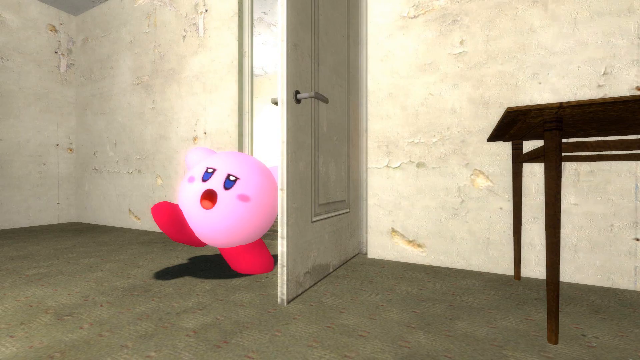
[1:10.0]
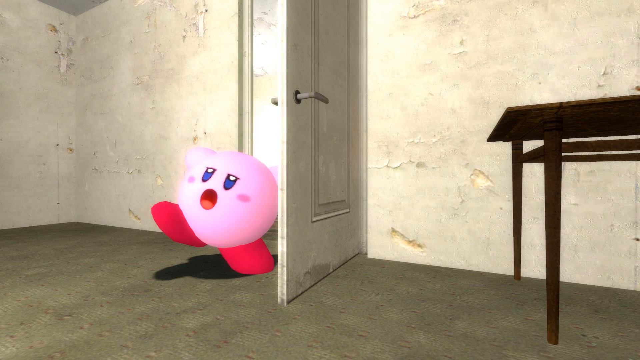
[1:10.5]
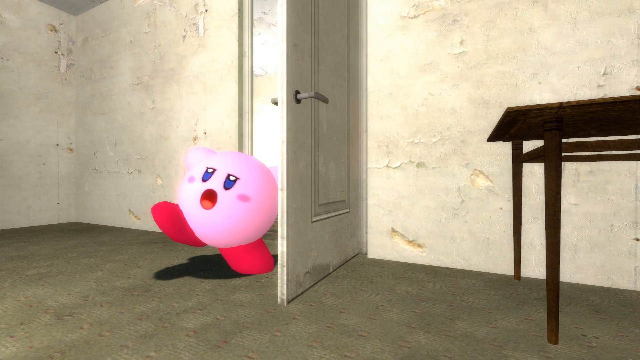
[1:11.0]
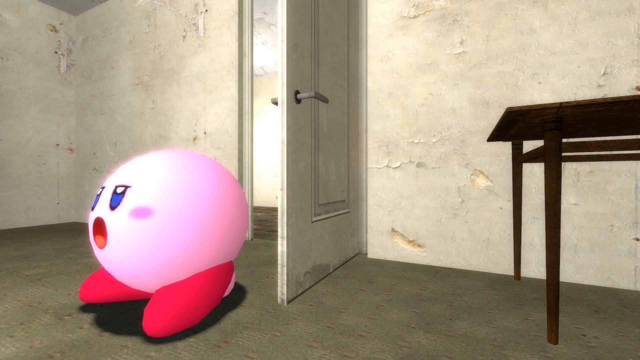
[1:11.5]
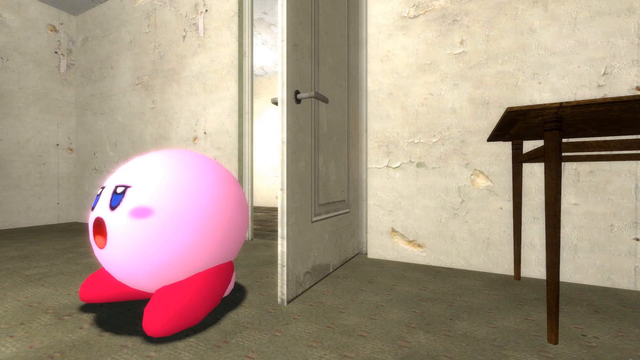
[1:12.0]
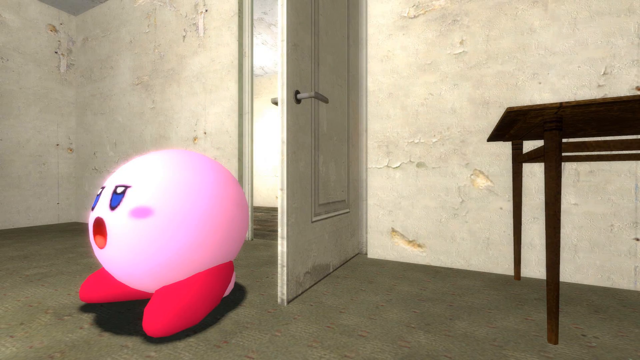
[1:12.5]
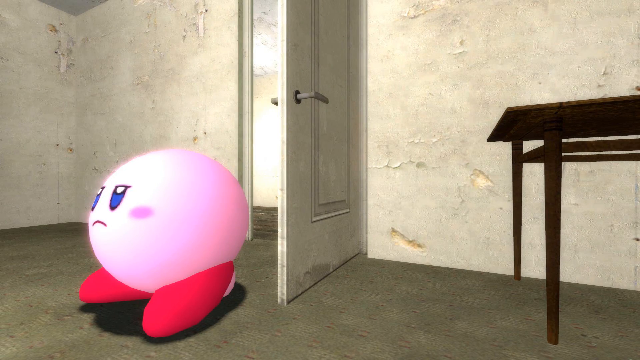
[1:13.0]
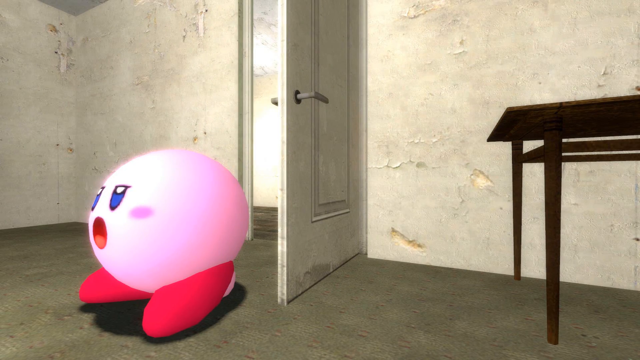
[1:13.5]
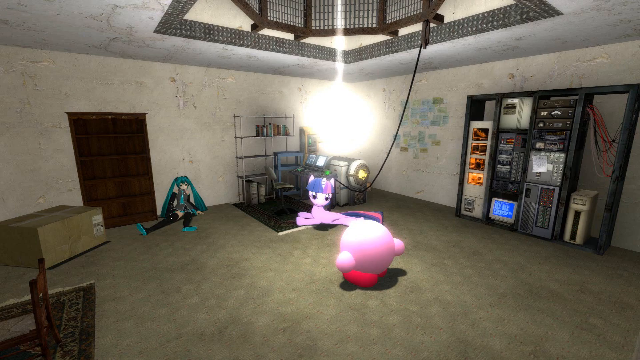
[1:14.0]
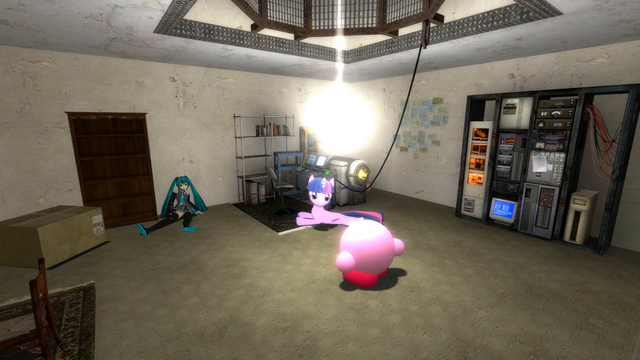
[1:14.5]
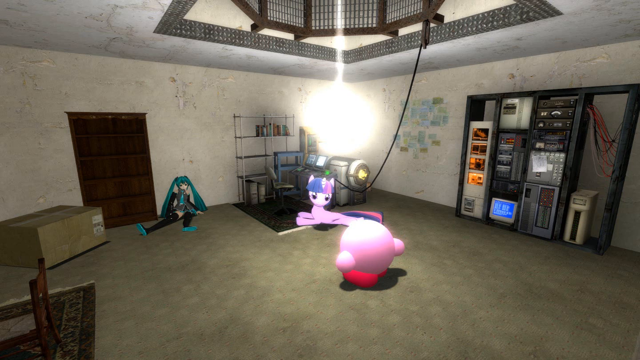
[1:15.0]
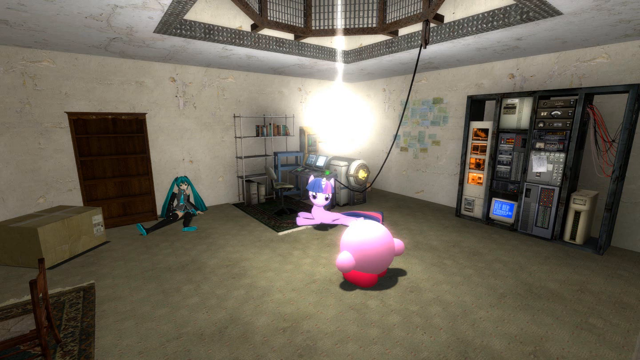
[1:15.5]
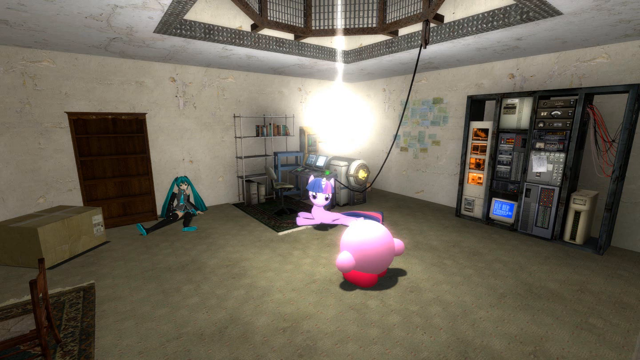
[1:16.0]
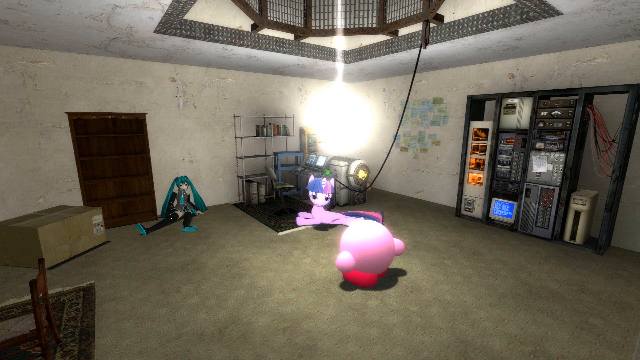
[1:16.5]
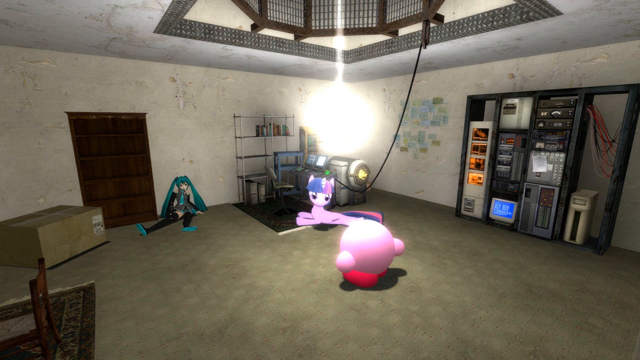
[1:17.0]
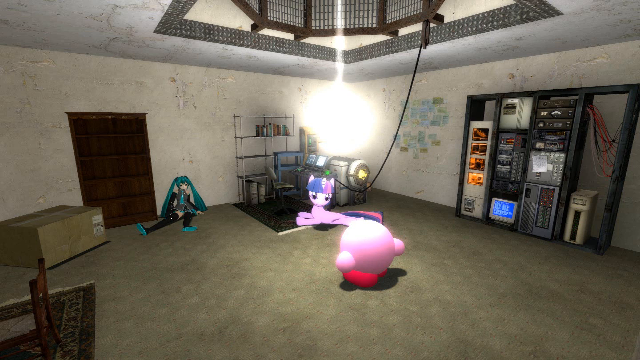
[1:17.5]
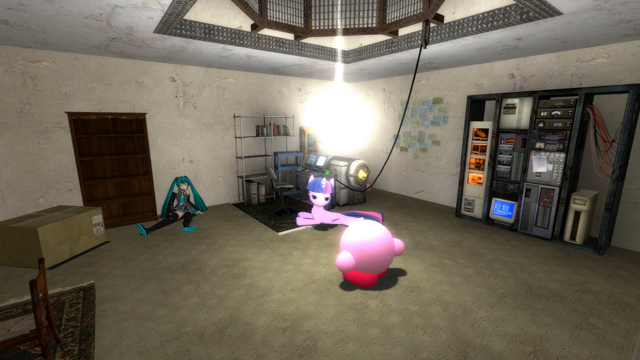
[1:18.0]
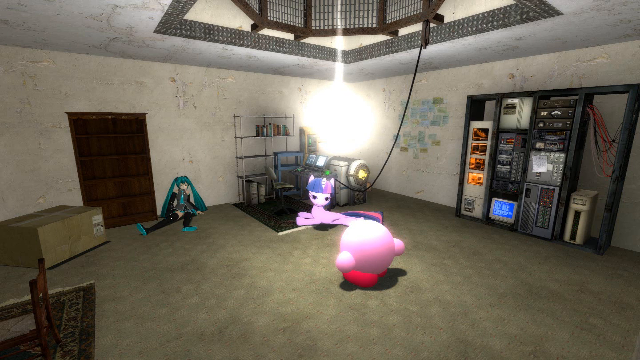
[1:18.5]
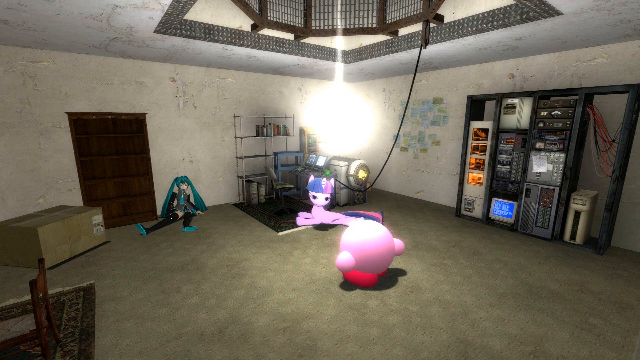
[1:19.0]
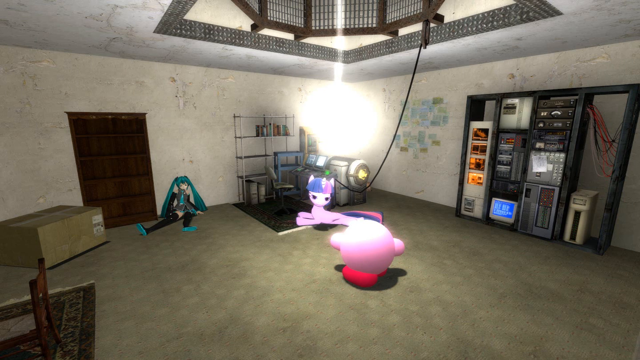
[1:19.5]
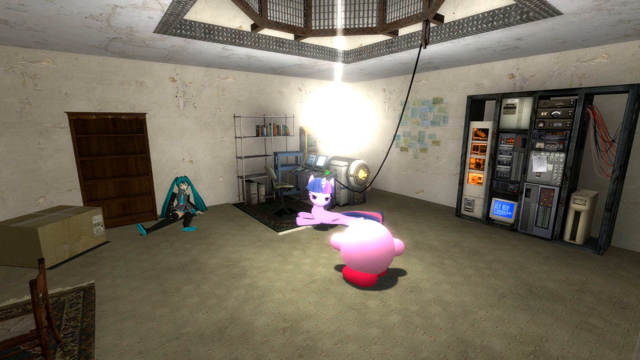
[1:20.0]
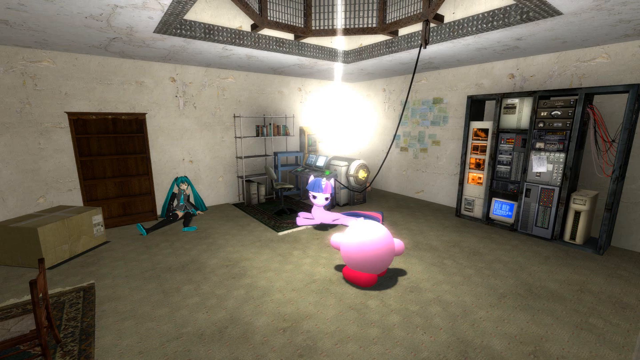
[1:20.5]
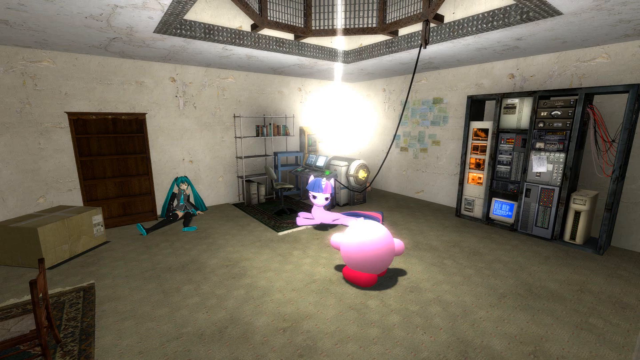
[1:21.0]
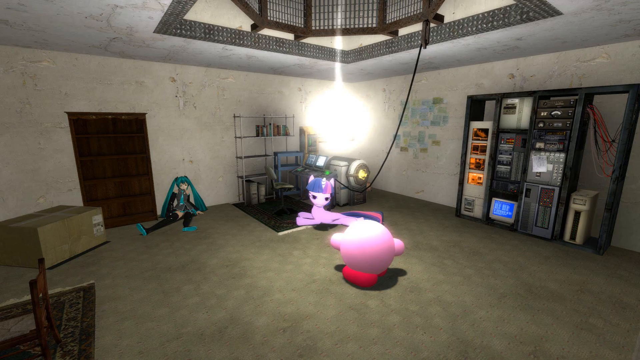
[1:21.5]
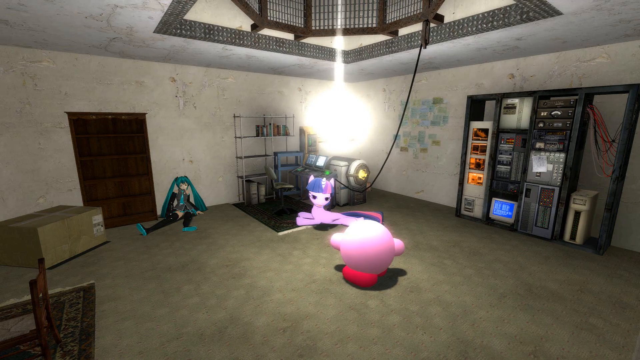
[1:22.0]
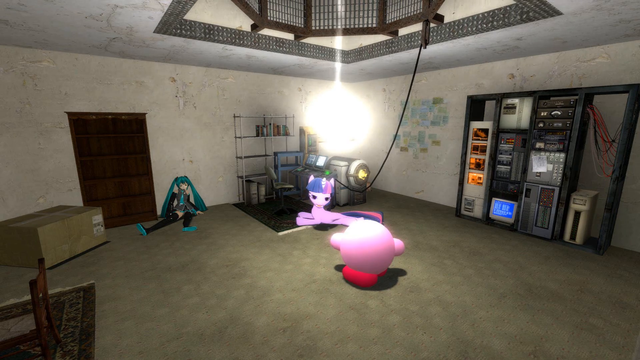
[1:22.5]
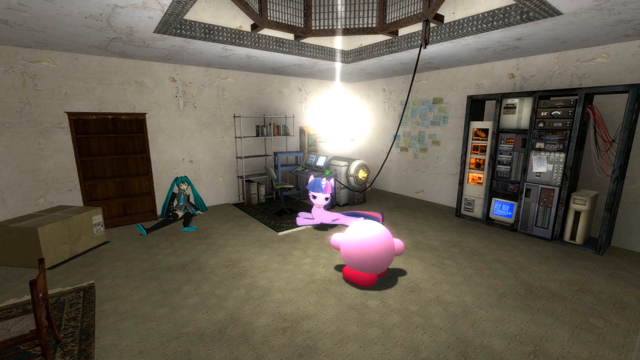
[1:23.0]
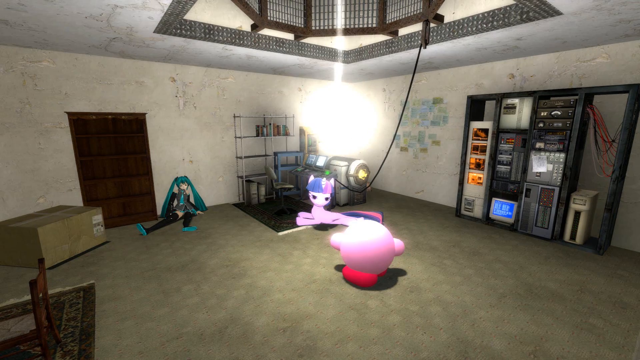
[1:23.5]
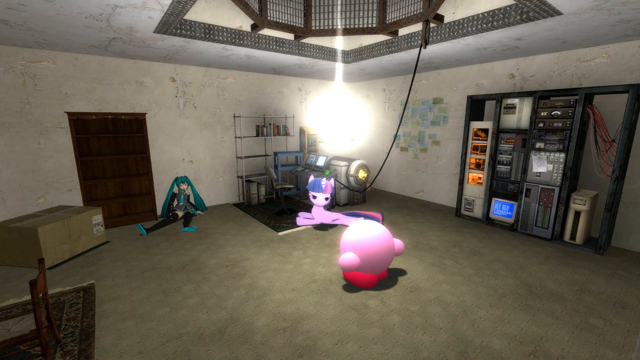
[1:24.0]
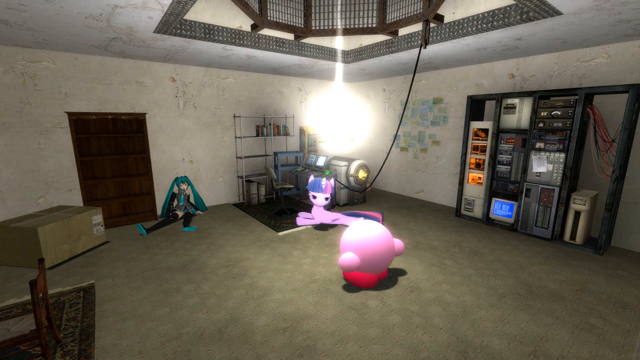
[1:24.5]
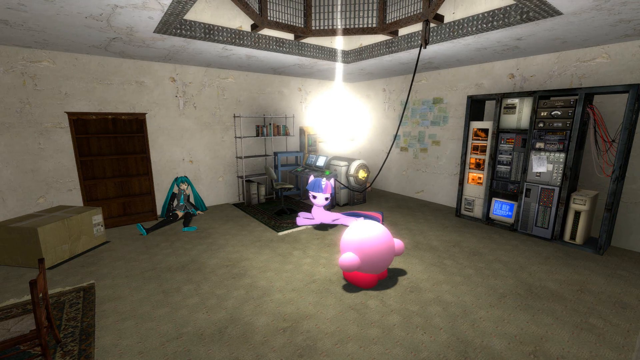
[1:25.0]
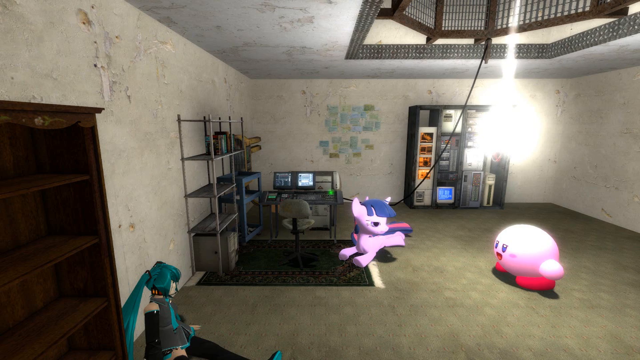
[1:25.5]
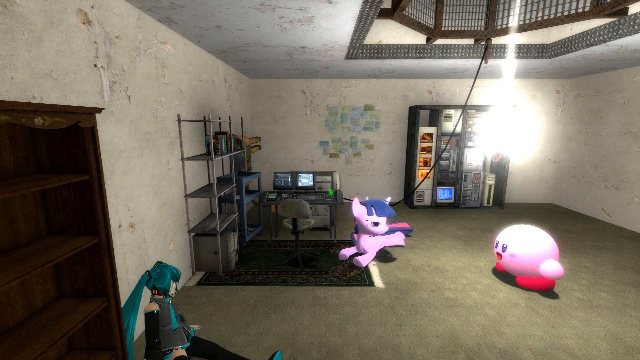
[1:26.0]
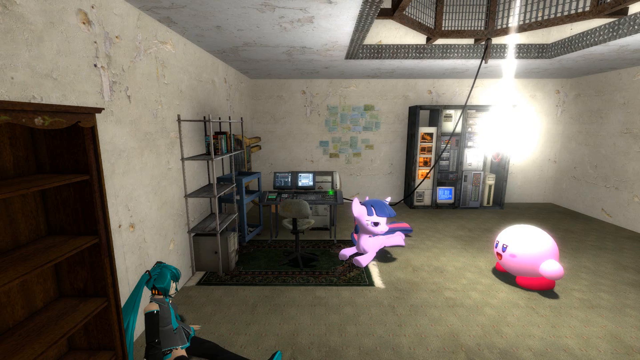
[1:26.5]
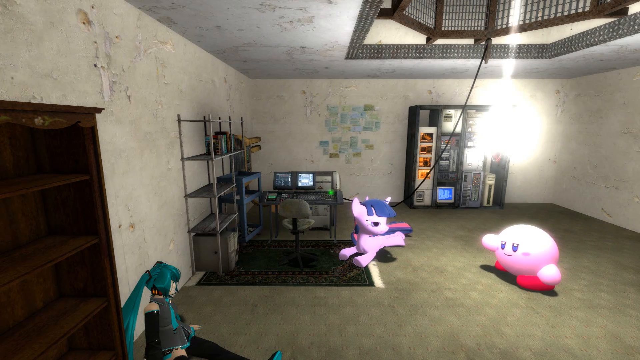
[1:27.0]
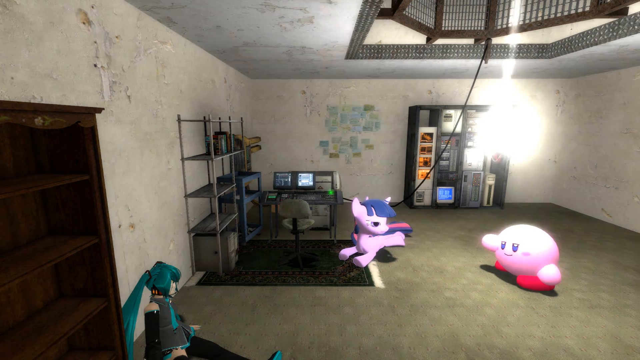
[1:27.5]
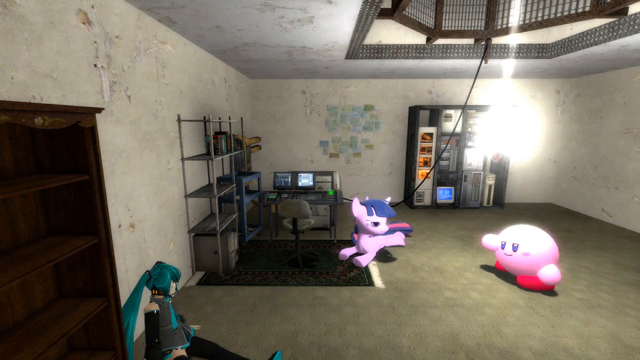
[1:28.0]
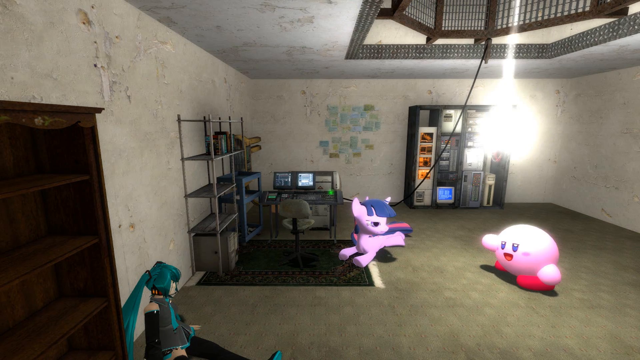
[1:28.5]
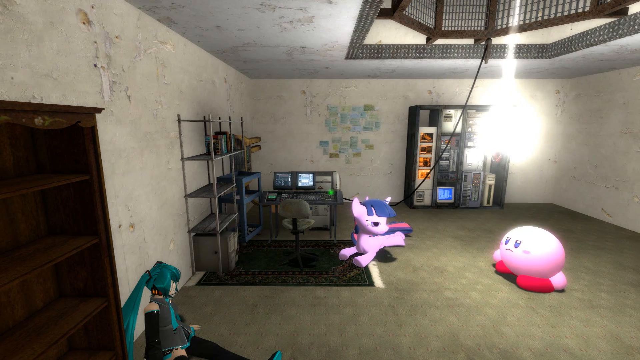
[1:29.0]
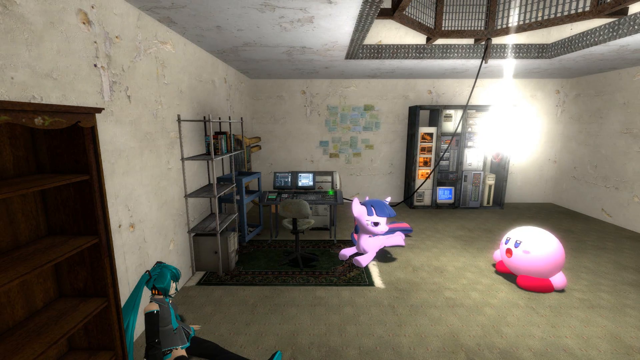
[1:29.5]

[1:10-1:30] The little pink guy is in the room with the princess and the horse-like creature. On the wall is a shelving case that may hold computer or electronic equipment. The room looks old, with paint seemingly peeling off the walls. There is a box and a chair. Something like fire, or a big white flame-like ball, shoots down from the ceiling. The pink guy yells into the room. The room has a cathedral ceiling with a cage-like thing, and there is a rug on the floor. The horse listens to the pink guy, who seems to be yelling or talking very aggressively or fast.